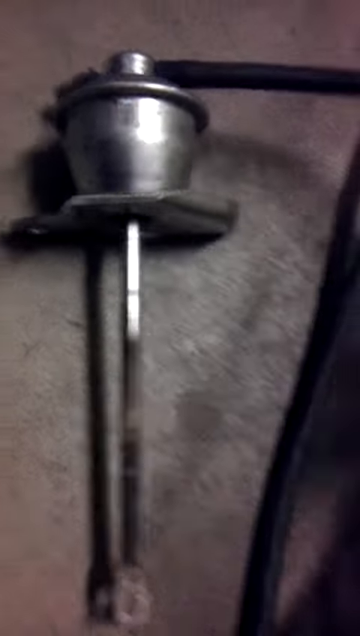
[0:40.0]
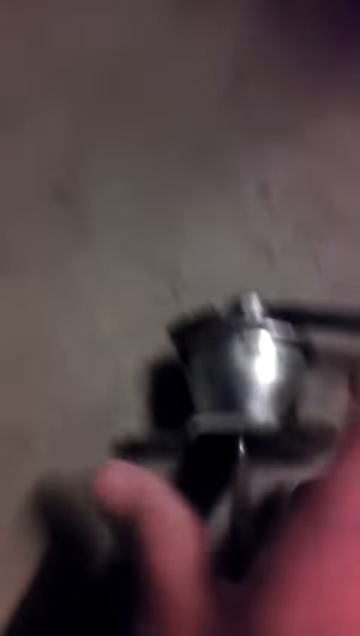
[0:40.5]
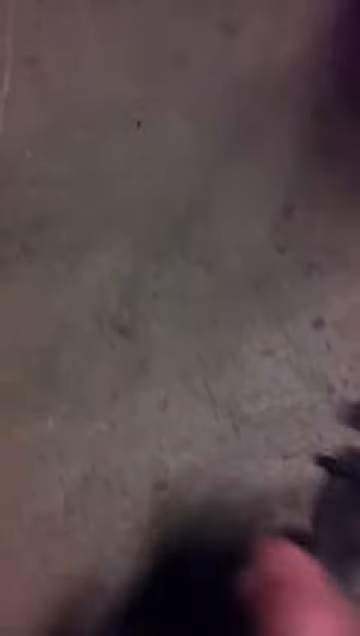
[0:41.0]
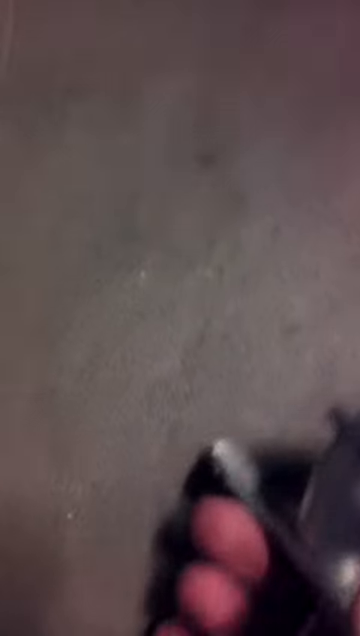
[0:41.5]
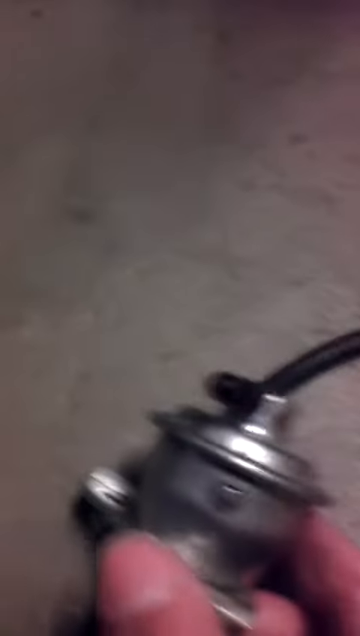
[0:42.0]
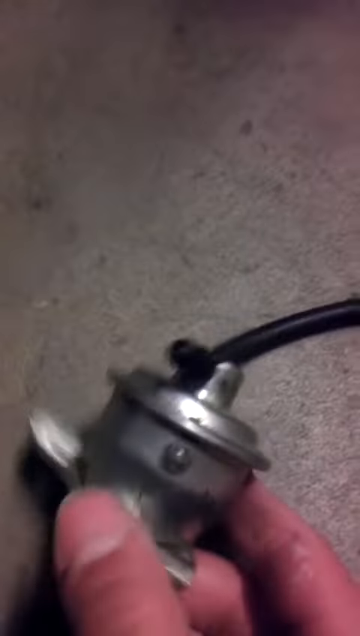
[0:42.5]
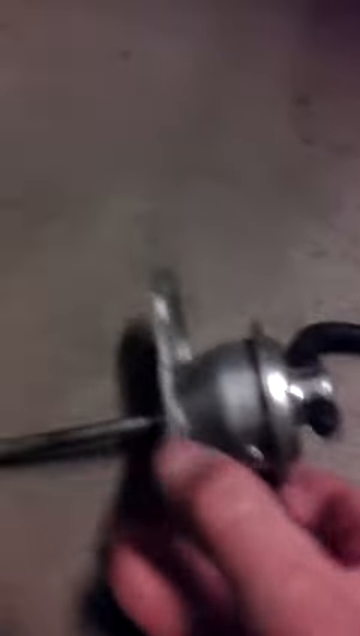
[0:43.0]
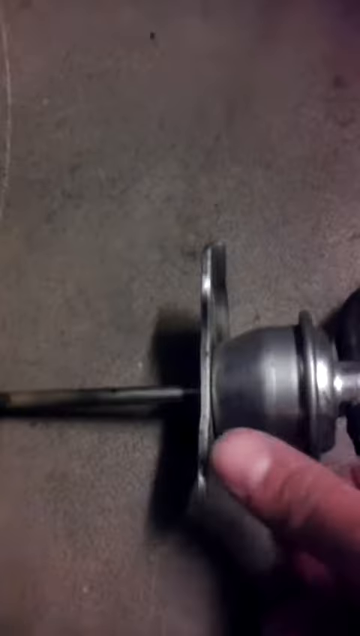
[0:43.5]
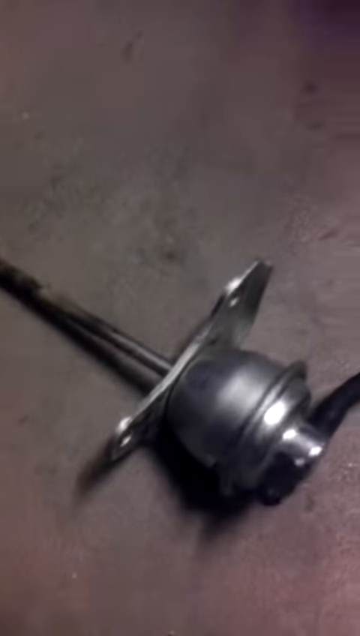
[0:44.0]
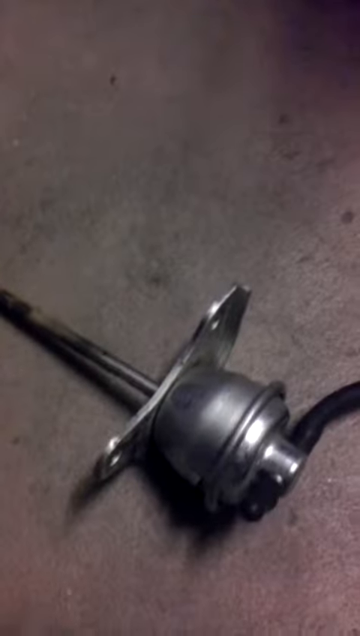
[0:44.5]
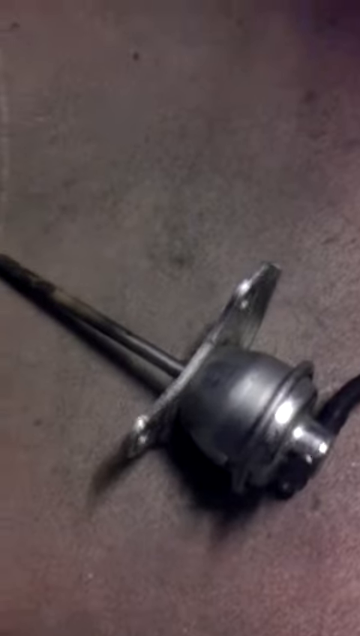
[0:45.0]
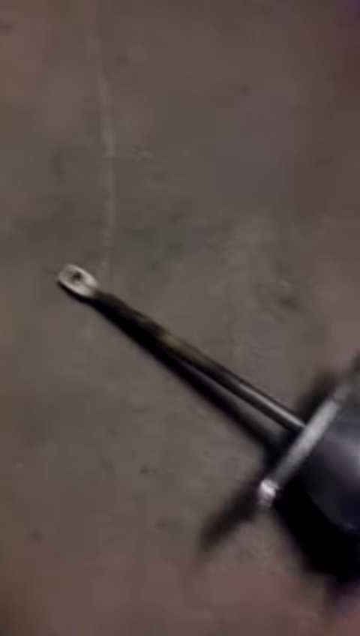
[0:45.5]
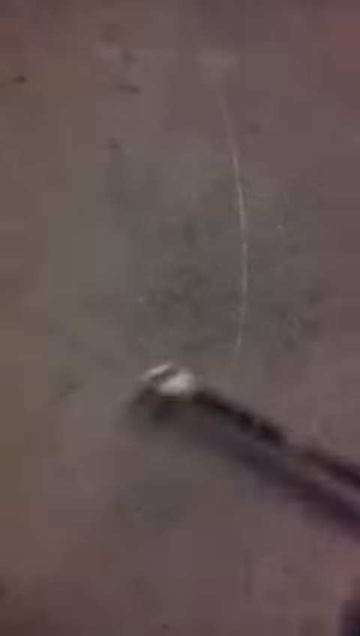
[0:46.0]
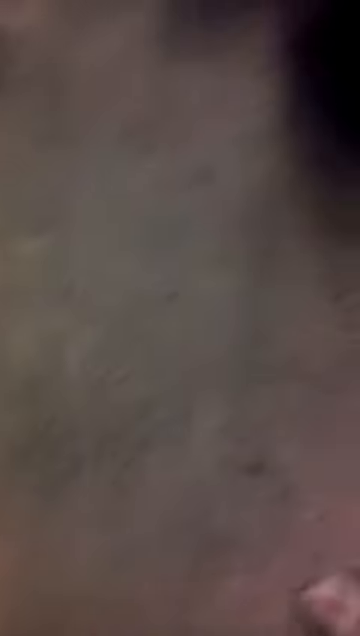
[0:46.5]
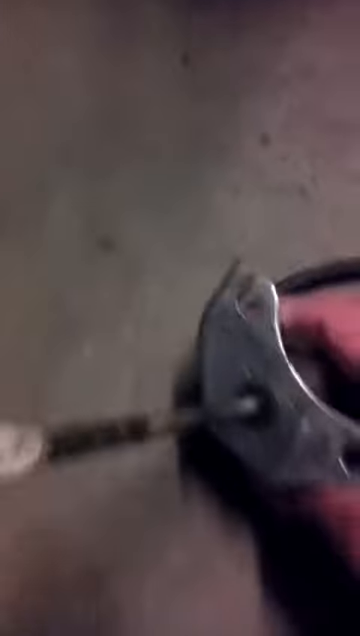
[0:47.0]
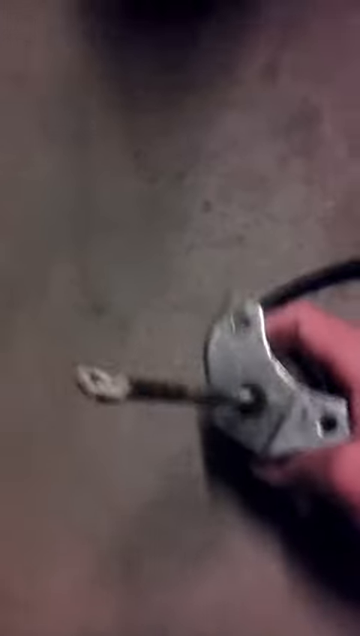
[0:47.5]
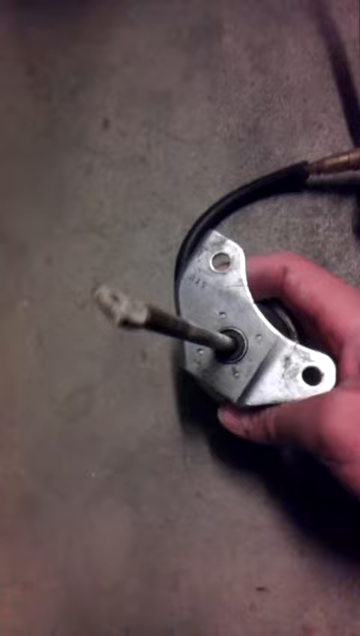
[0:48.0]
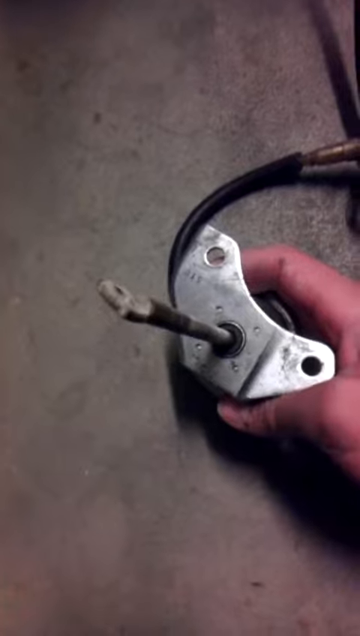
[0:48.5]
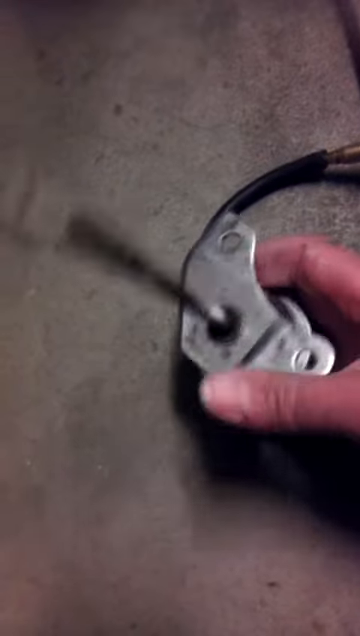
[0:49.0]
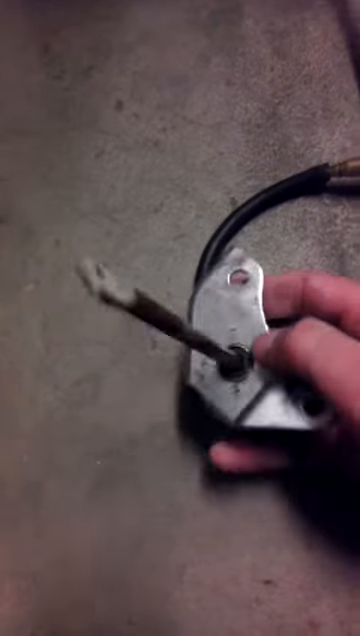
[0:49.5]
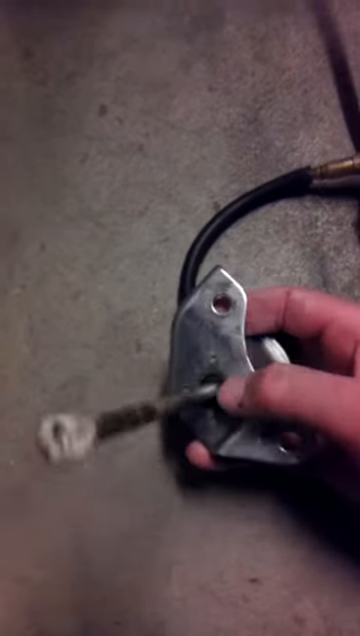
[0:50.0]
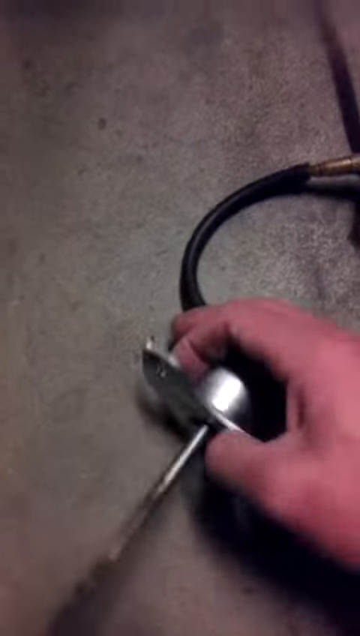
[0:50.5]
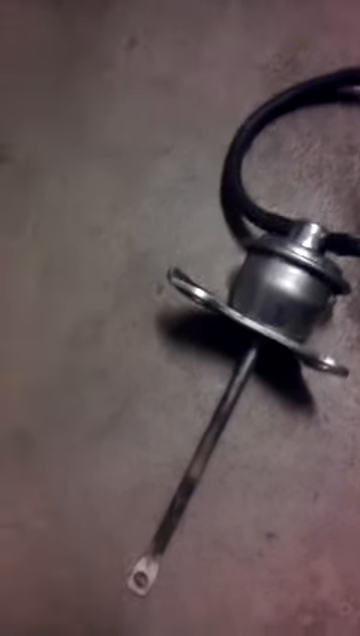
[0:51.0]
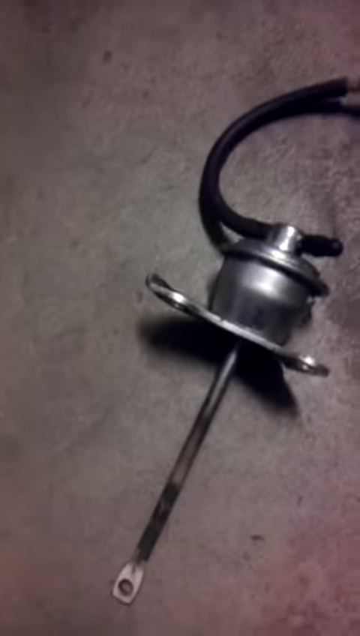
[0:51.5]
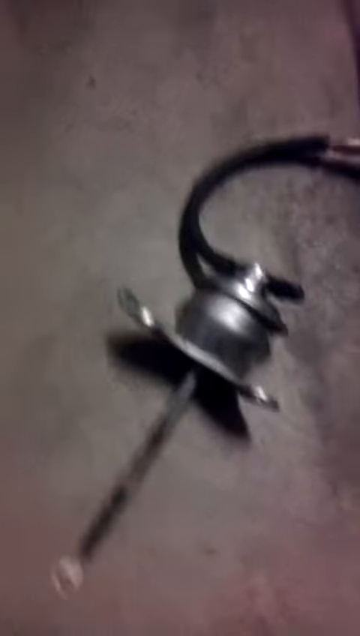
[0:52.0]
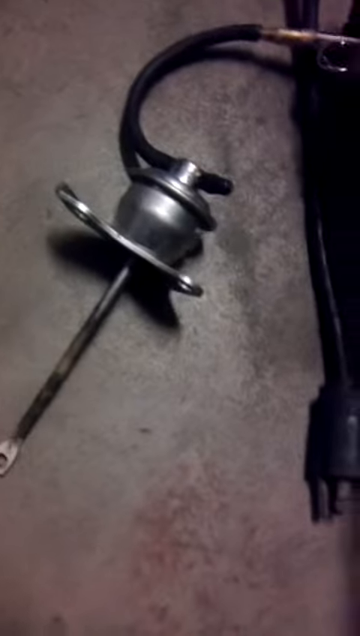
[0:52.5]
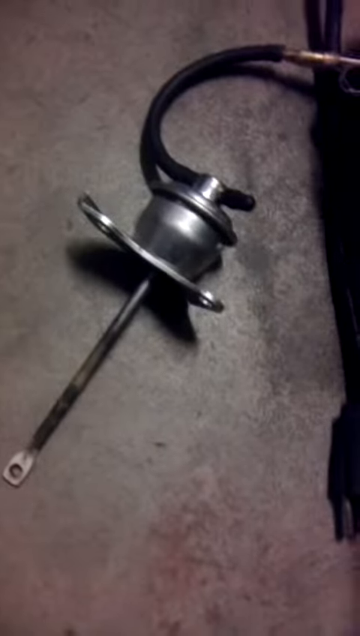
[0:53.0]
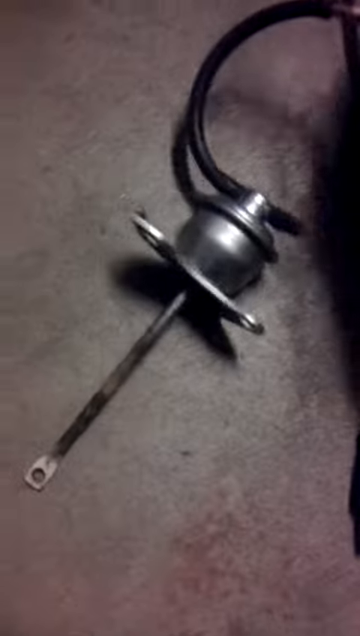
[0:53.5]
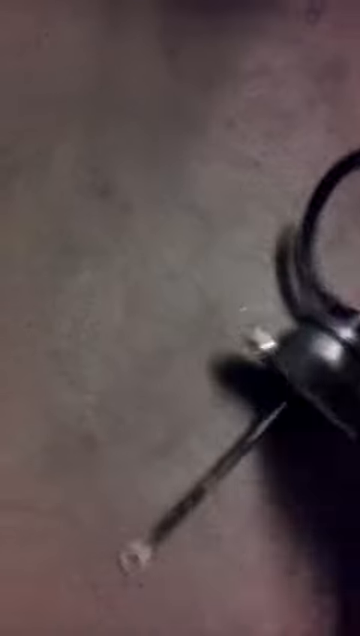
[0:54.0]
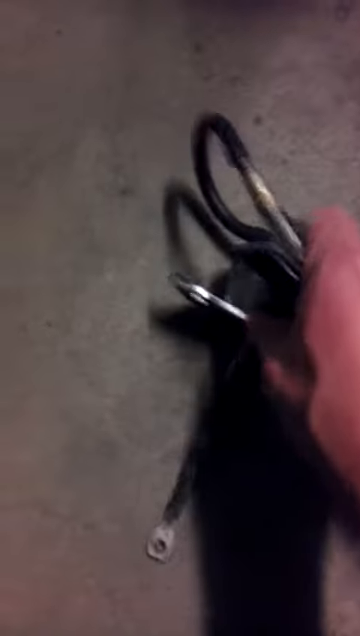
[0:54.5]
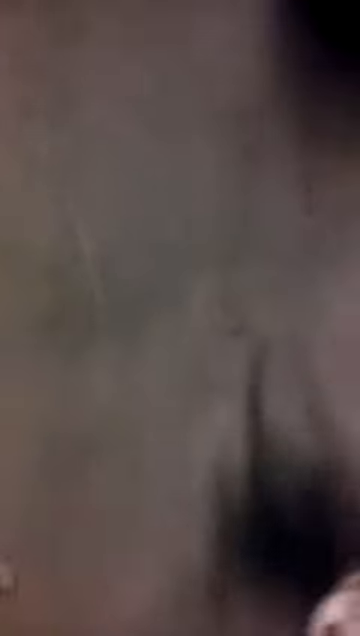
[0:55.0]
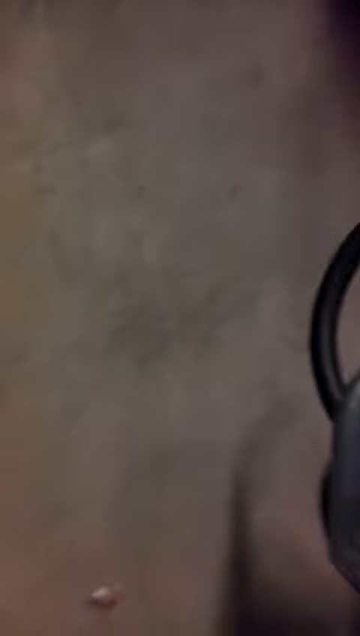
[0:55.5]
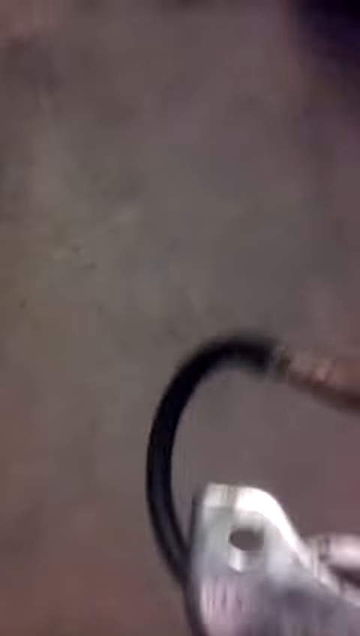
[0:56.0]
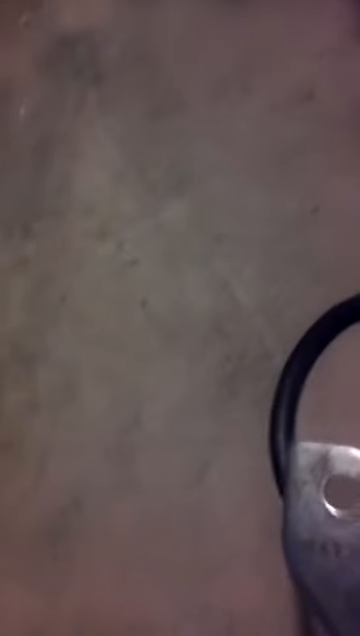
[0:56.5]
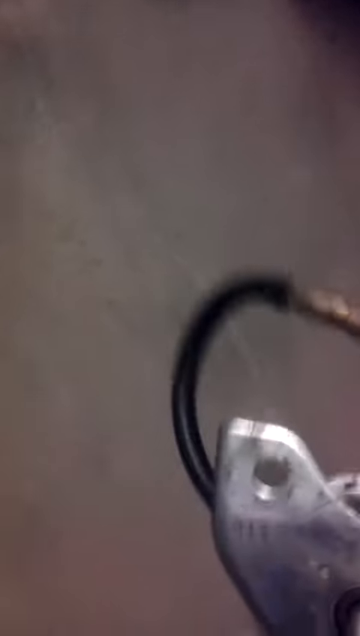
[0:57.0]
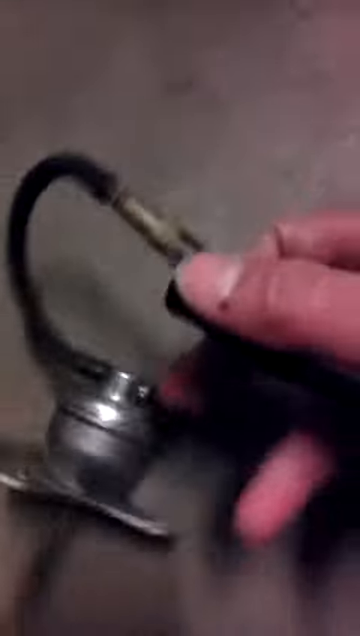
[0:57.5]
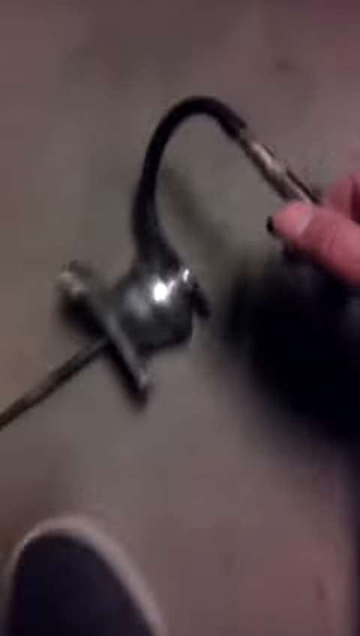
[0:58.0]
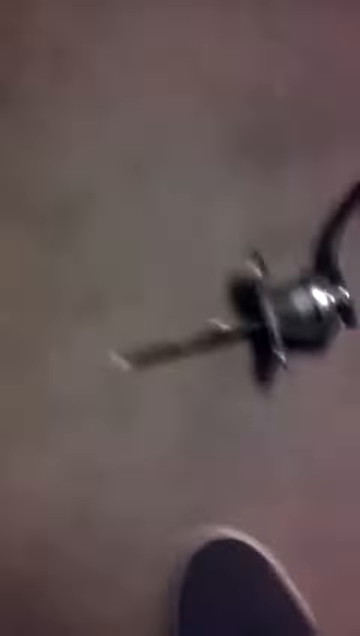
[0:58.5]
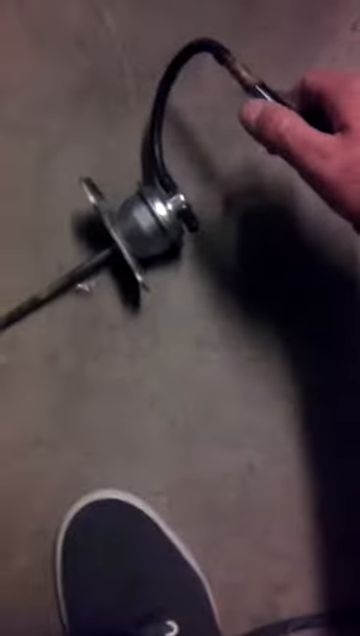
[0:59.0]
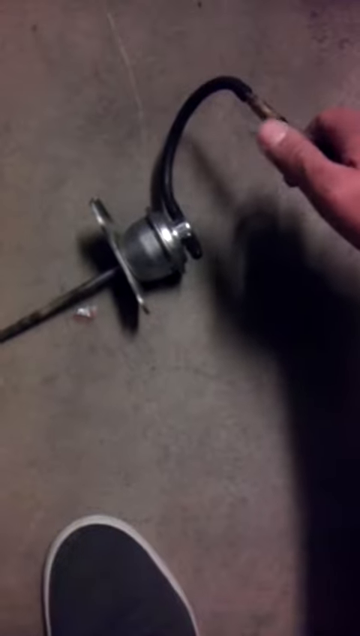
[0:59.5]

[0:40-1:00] The man is still showing the metal piece, which is connected to a black tube, displaying it from different angles and seemingly pointing to different areas of it. A single black Vans-type shoe is visible. The video is very low quality and very shaky, moving all over the place; at moments the object he appears to be trying to show goes out of frame. In some parts he holds the tool and points at it, and in others he sets it on what looks to be a concrete floor in a garage. A power cable is briefly visible. Toward the end, he seems to start unscrewing the black cable from the top of the metal tool accessory at the end of the black cord.